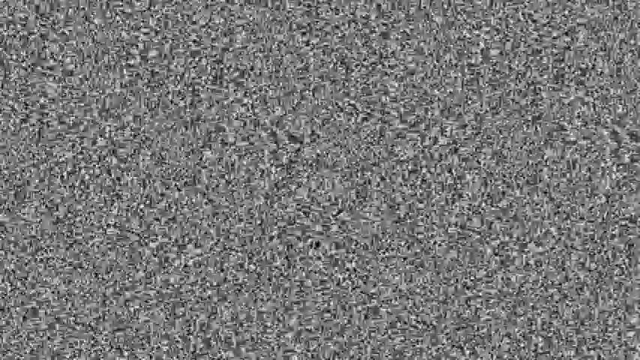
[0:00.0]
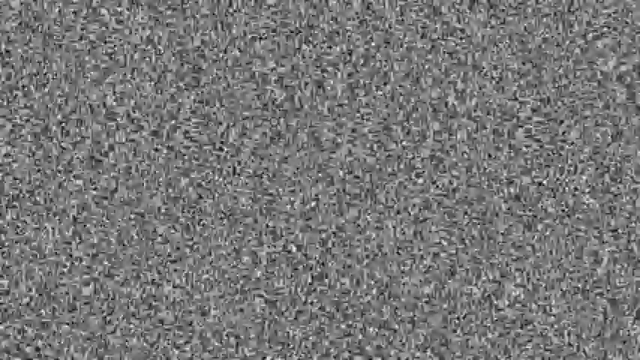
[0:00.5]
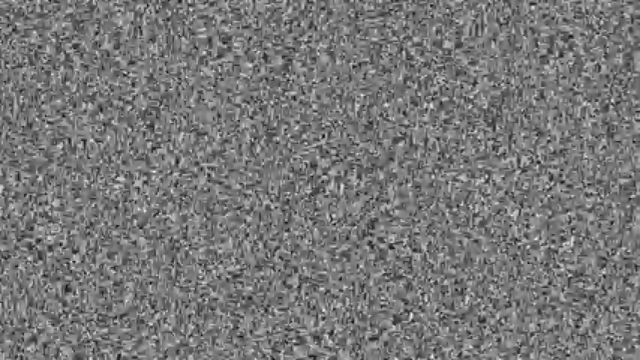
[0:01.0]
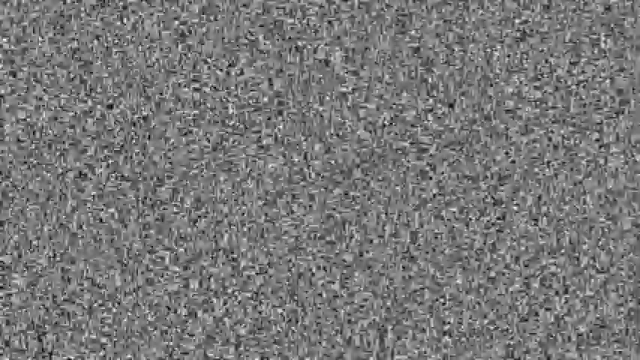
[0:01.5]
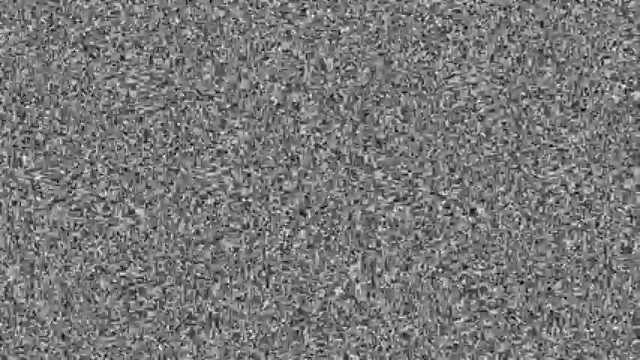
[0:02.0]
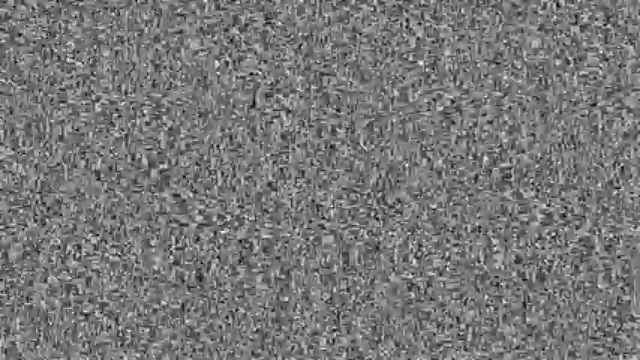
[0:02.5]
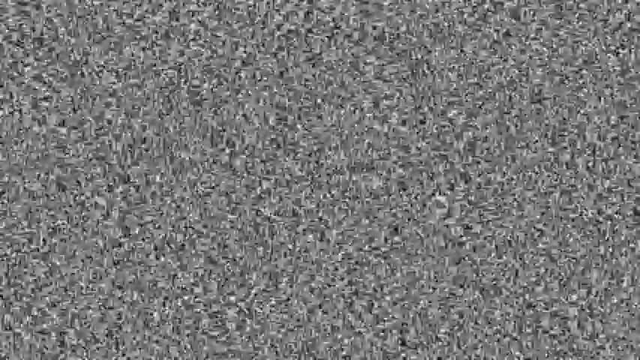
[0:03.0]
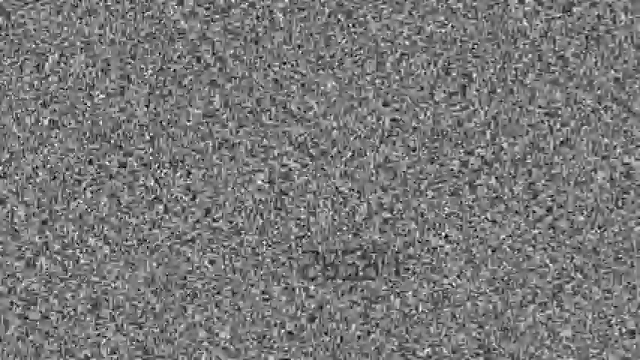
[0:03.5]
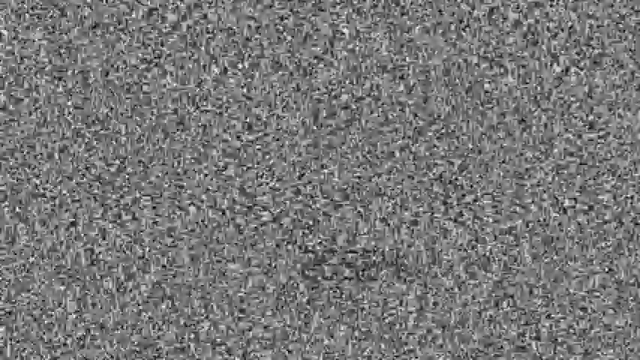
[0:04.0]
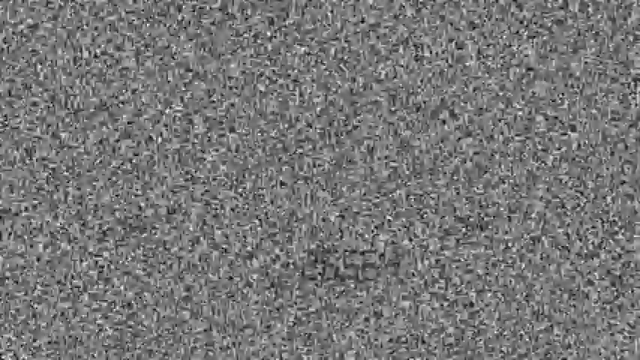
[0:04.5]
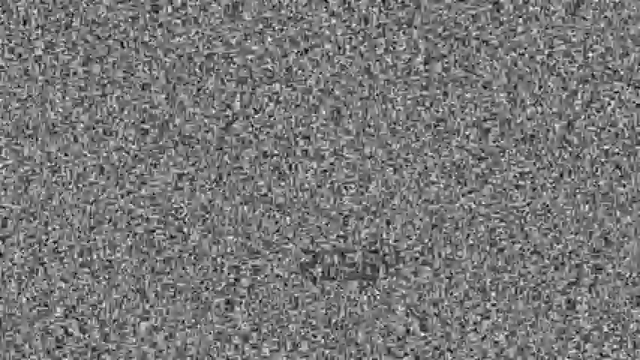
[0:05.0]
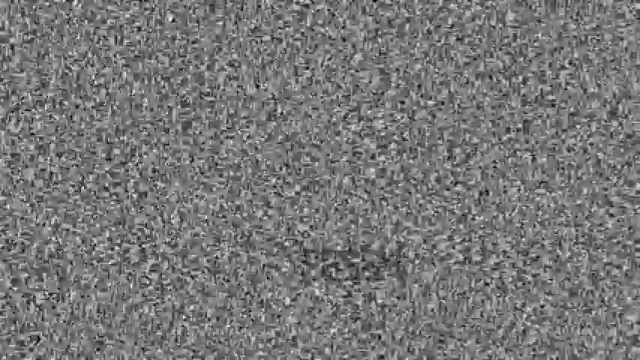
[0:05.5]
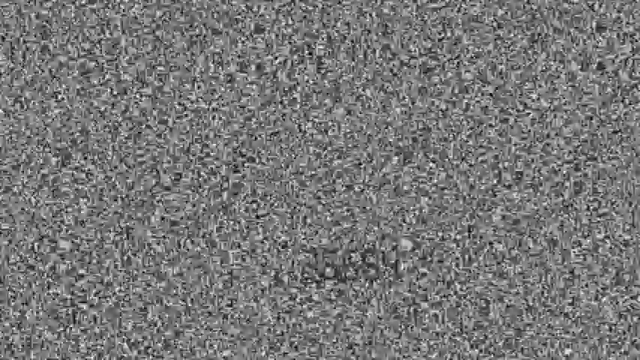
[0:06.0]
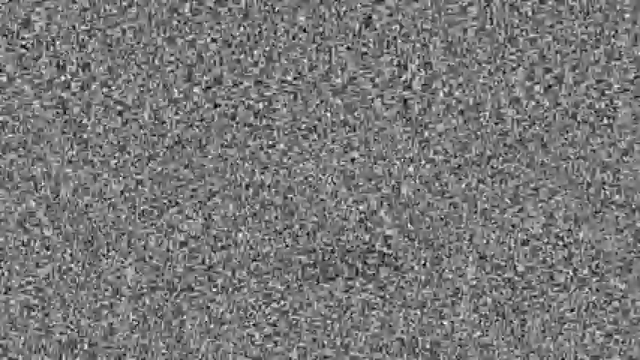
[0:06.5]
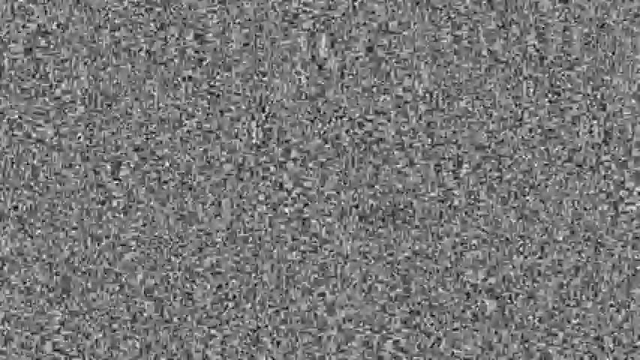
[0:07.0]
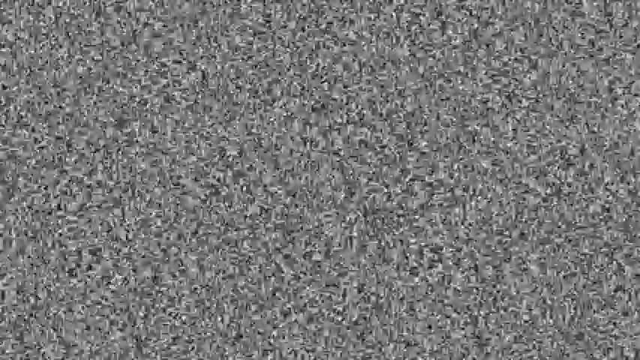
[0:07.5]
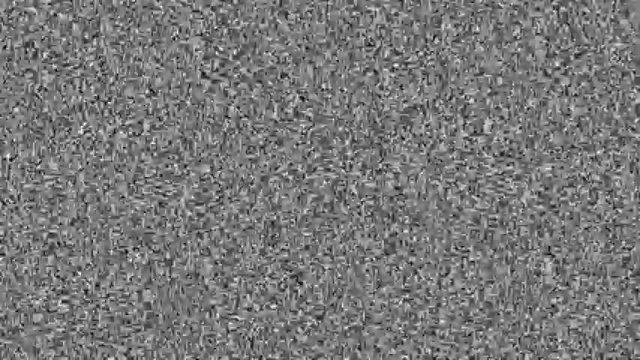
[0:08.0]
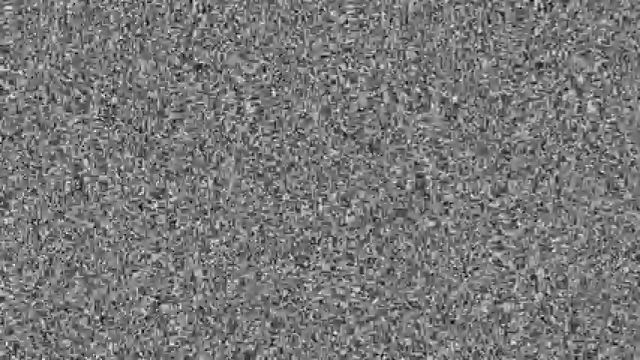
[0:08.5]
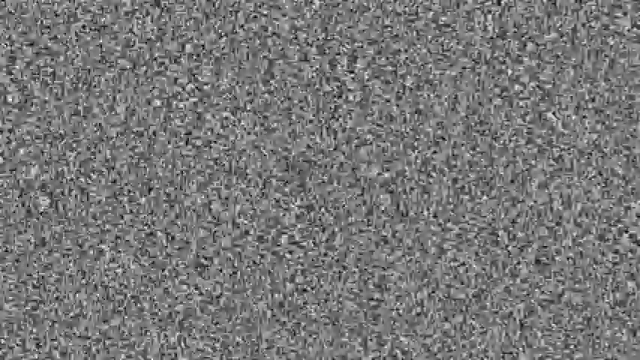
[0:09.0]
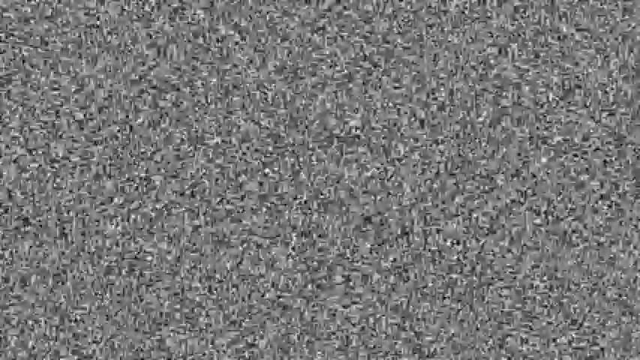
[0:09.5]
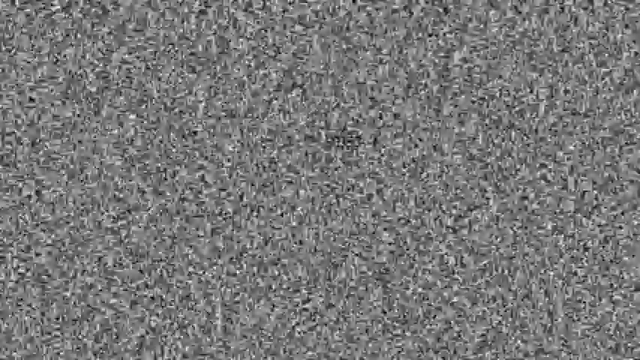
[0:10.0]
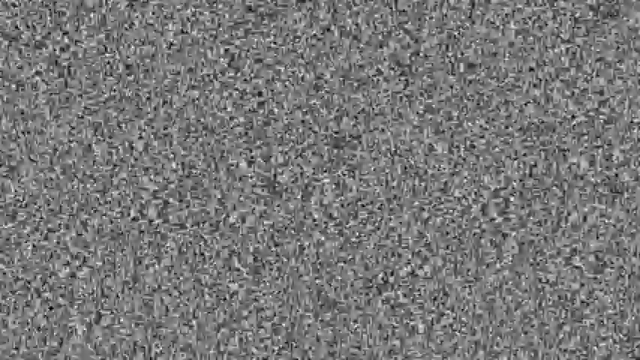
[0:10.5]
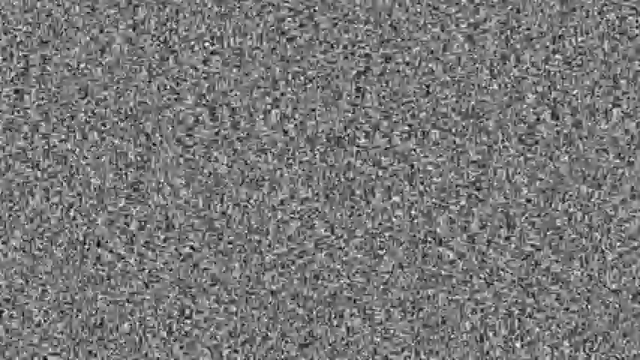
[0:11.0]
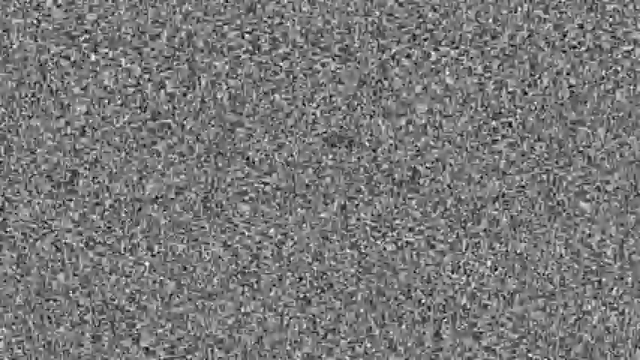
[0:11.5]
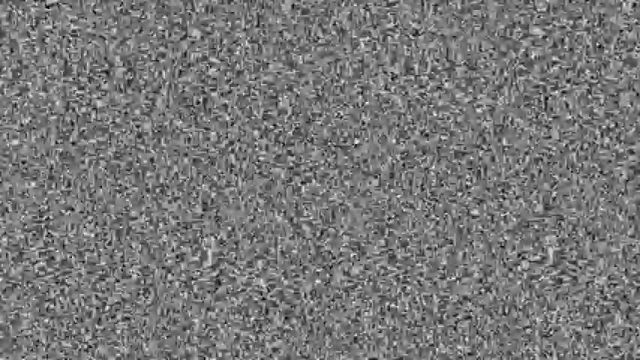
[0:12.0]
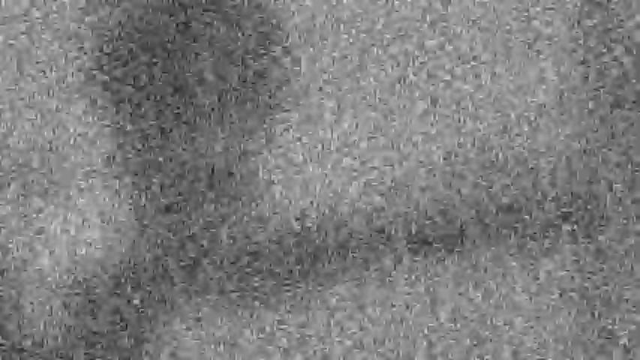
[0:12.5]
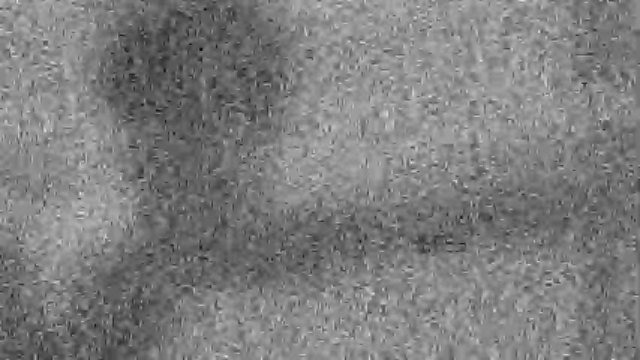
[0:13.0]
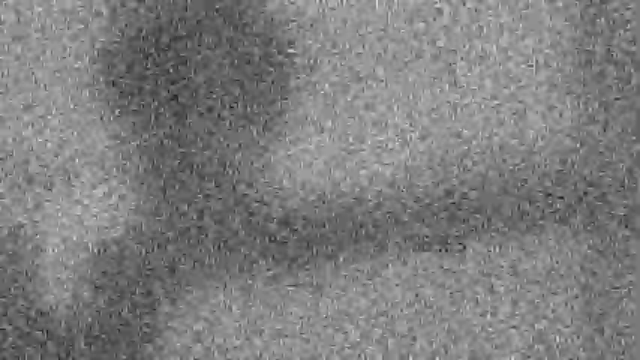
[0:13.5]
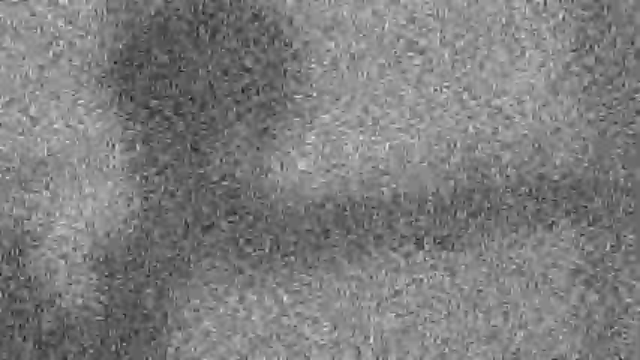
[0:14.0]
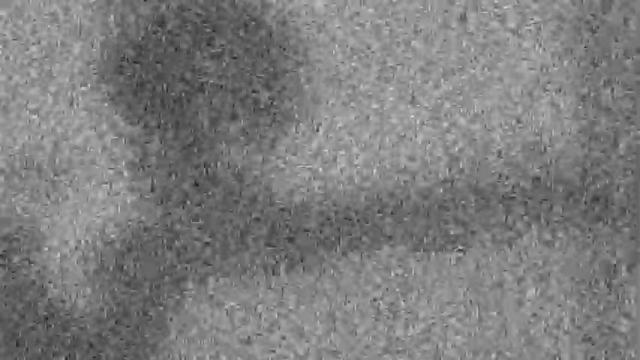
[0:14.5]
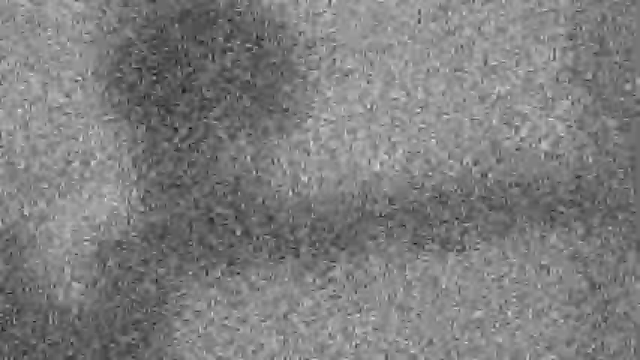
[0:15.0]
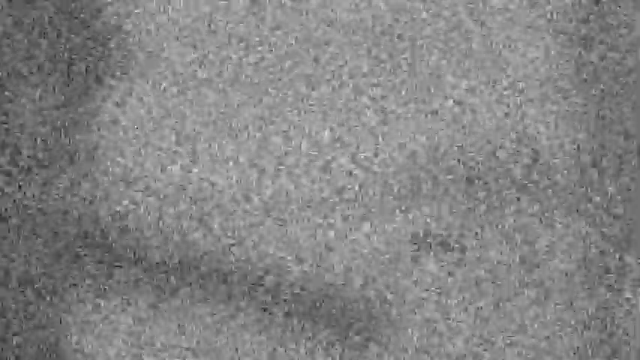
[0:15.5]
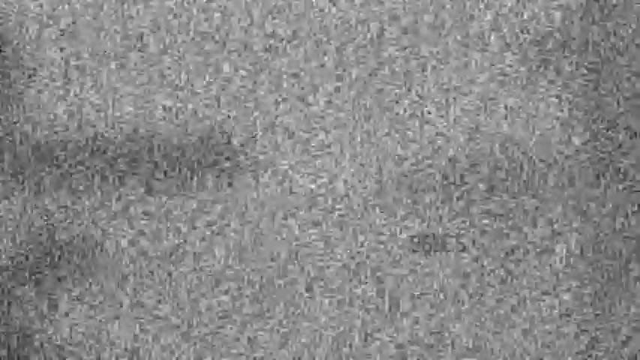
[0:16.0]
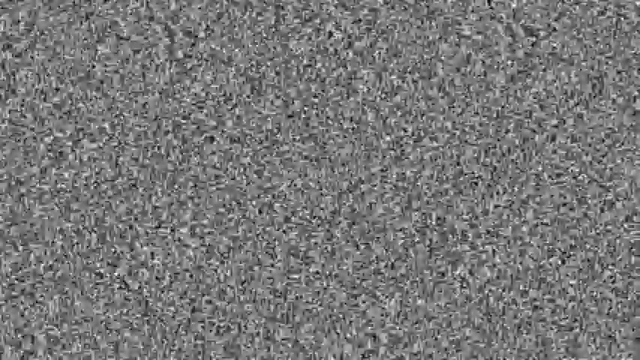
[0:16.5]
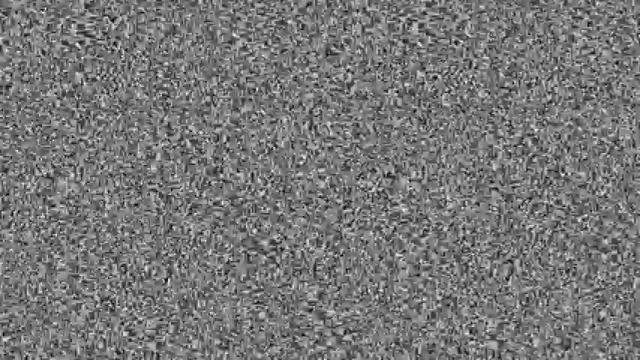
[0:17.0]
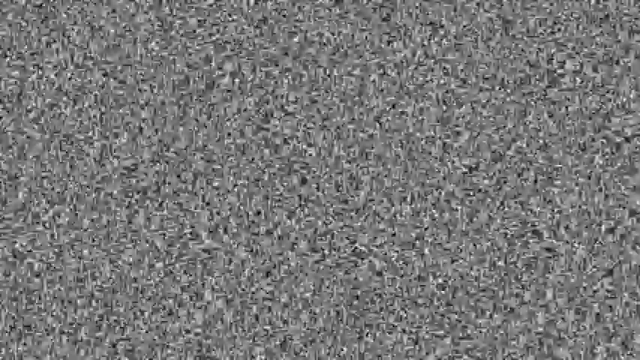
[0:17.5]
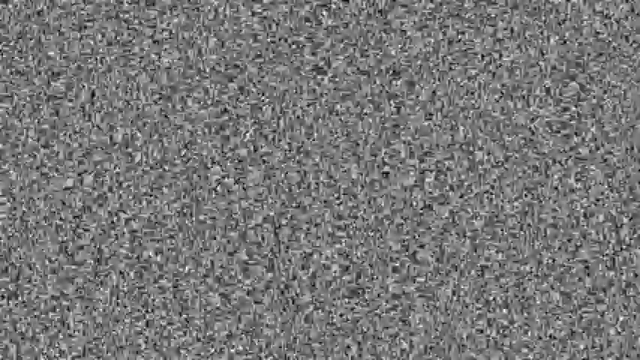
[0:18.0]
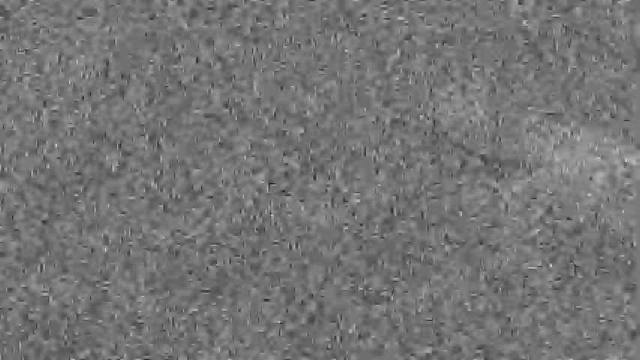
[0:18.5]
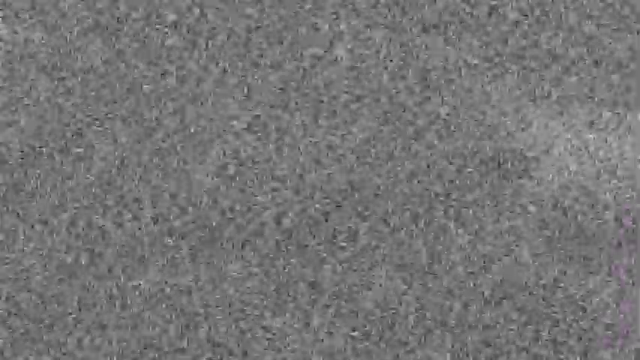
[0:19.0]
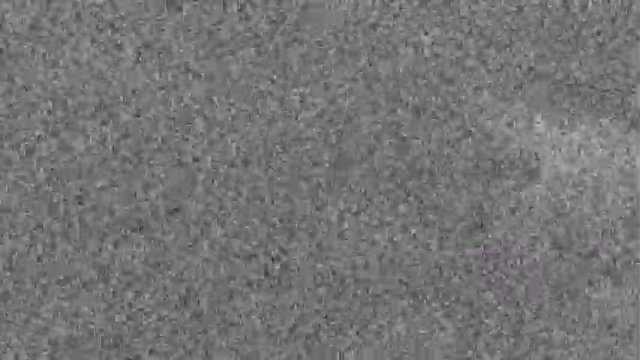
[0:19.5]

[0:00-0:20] The video shows grey static, possibly a TV or part of some type of streaming service that went down; it is a mass of dots, apparently black and white. Numbers appear at the bottom, beginning with a 2. The image seems to go away for a moment and zoom backwards to another angle, and the static becomes slightly denser. What seems to be a person-like silhouette of a figure appears, still in static so nothing is clear; it seems to reach an arm out and then back, and the figure kind of leaves the area. More numbers appear underneath, starting 9, 6 and followed by others. The density of the static changes again, becoming very focused, and then the static starts to loosen up.